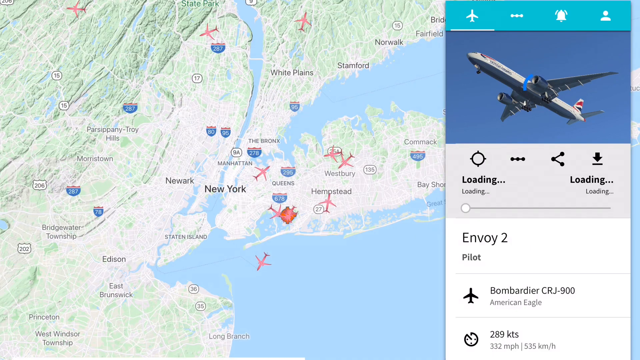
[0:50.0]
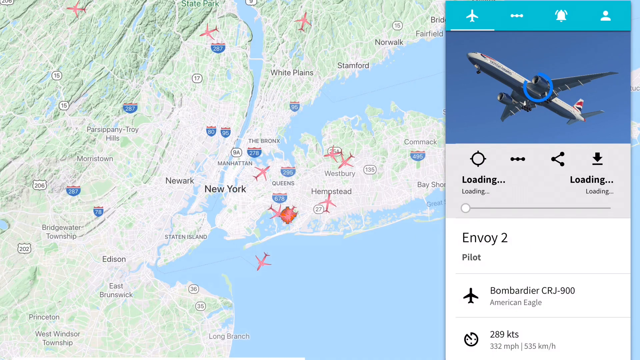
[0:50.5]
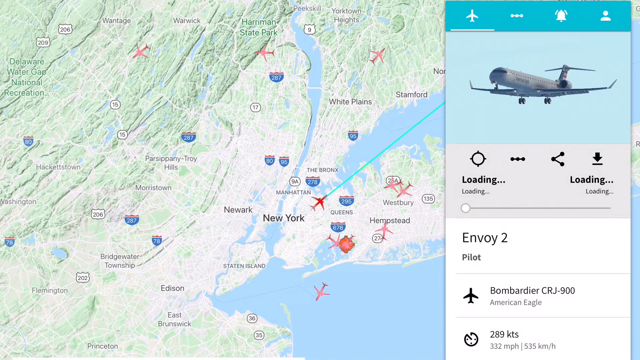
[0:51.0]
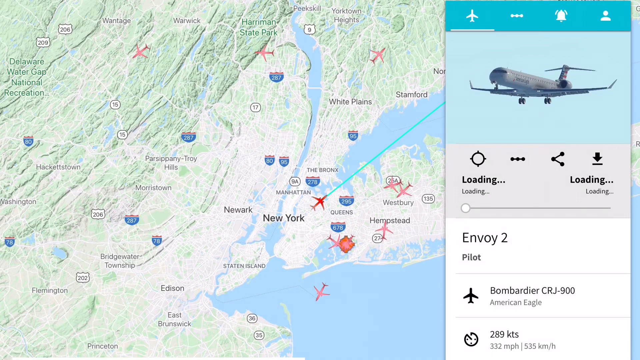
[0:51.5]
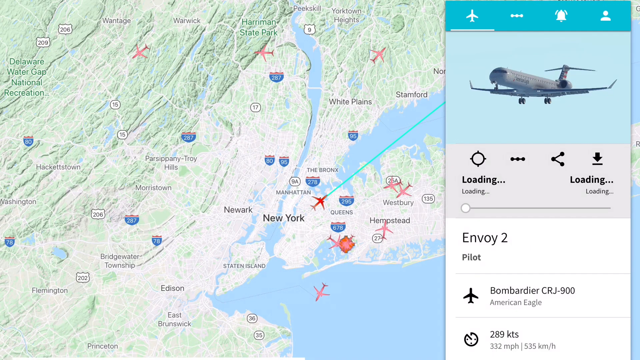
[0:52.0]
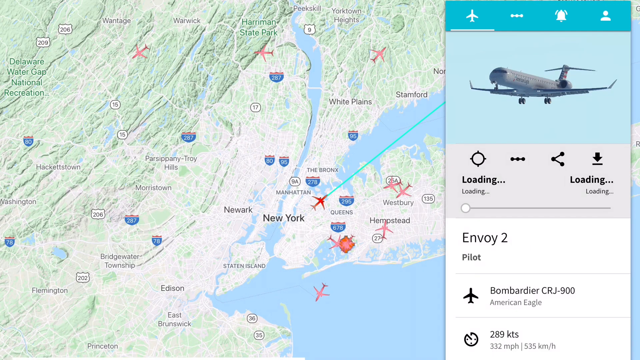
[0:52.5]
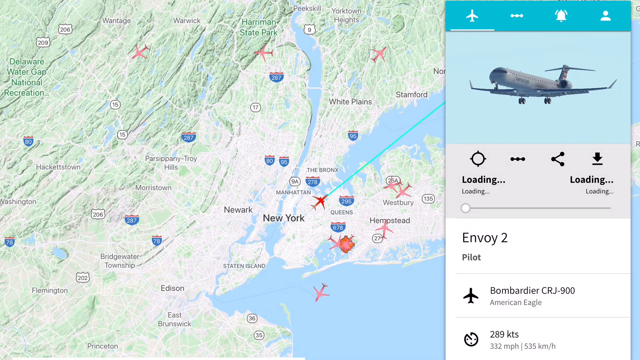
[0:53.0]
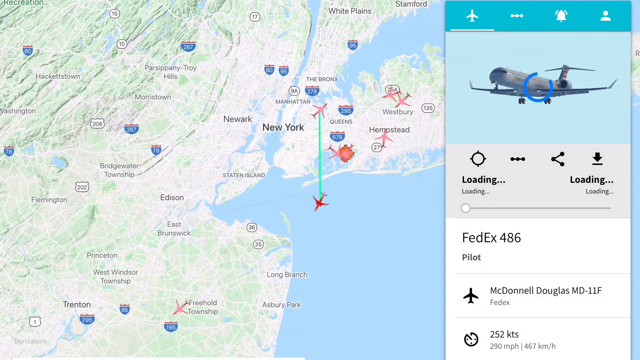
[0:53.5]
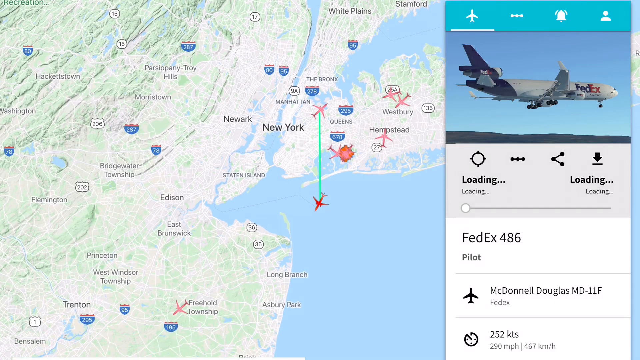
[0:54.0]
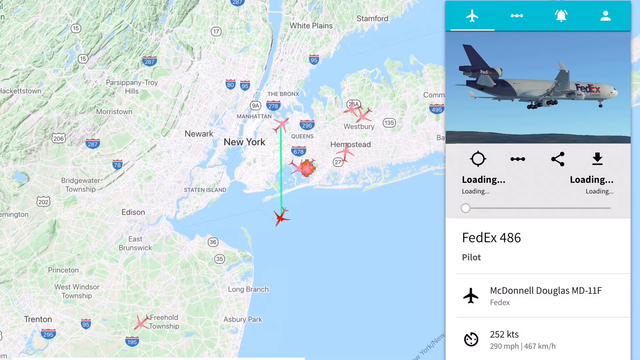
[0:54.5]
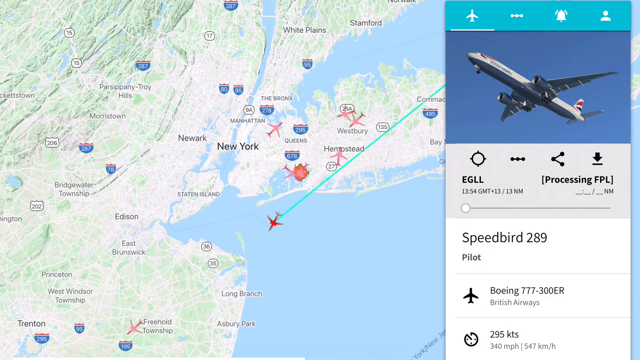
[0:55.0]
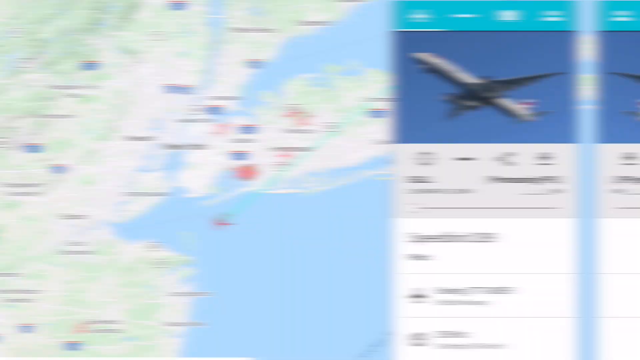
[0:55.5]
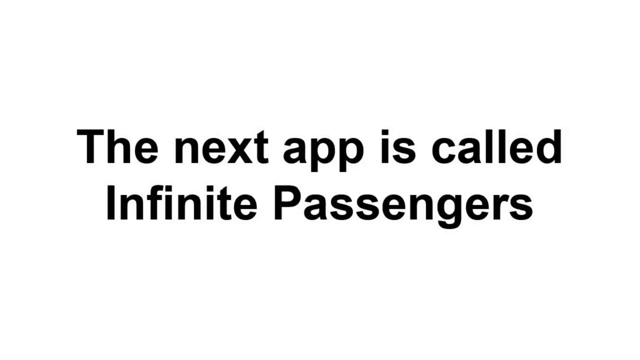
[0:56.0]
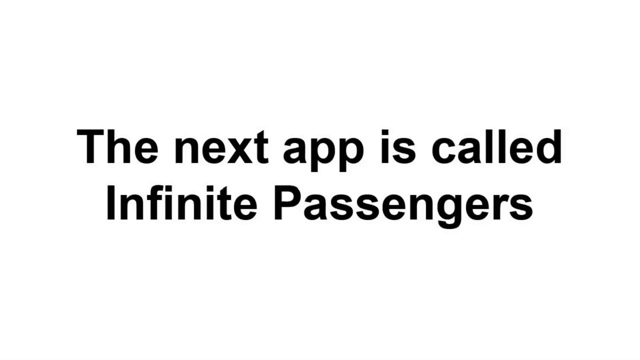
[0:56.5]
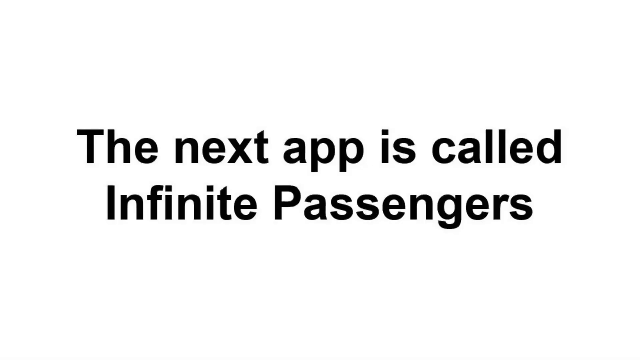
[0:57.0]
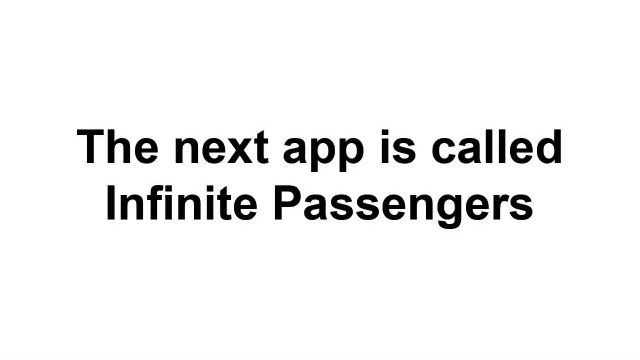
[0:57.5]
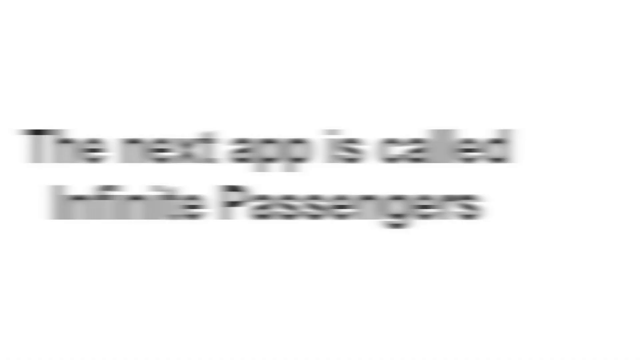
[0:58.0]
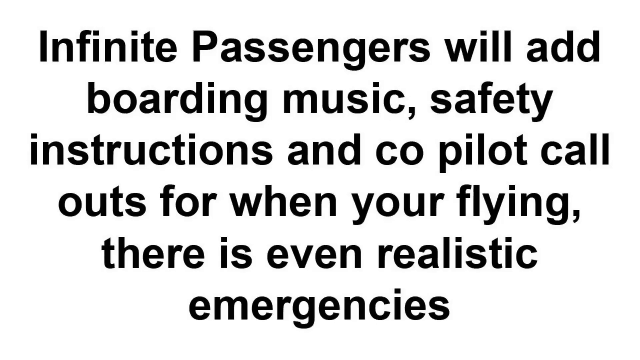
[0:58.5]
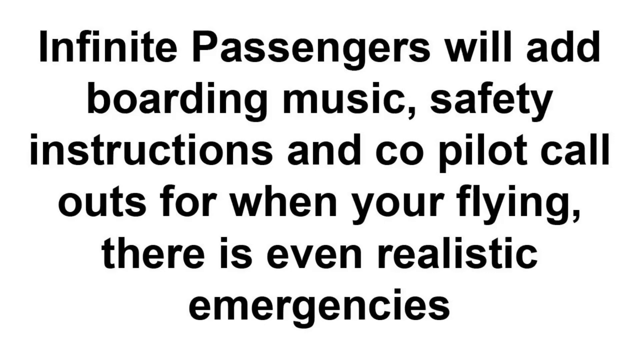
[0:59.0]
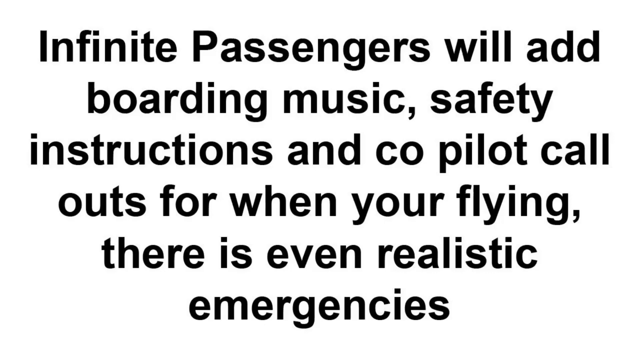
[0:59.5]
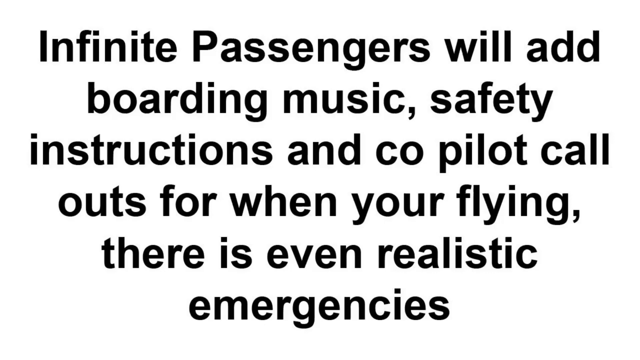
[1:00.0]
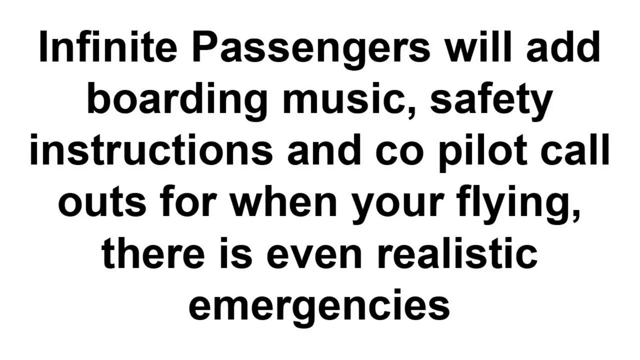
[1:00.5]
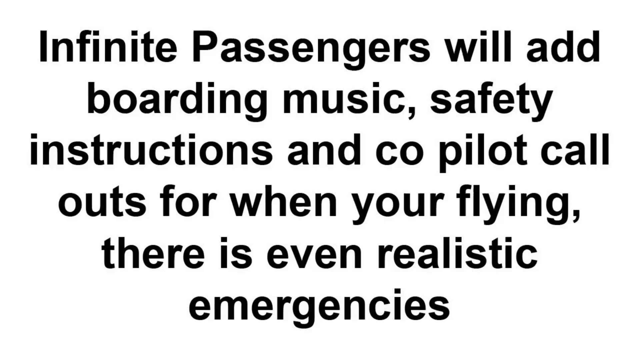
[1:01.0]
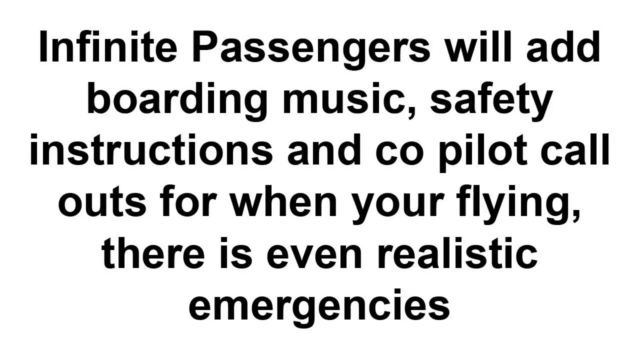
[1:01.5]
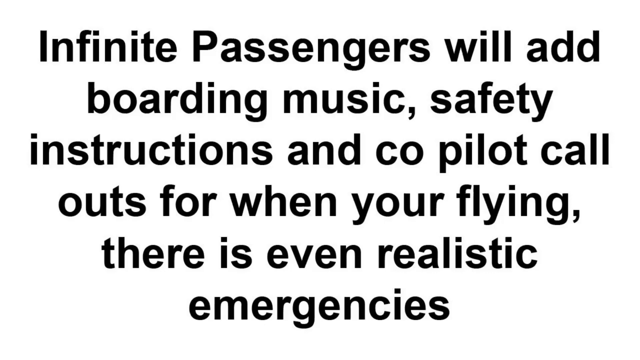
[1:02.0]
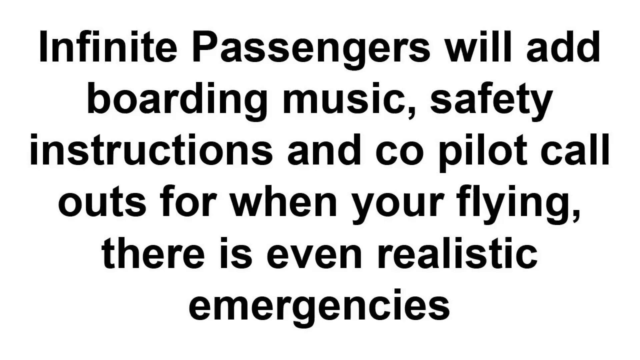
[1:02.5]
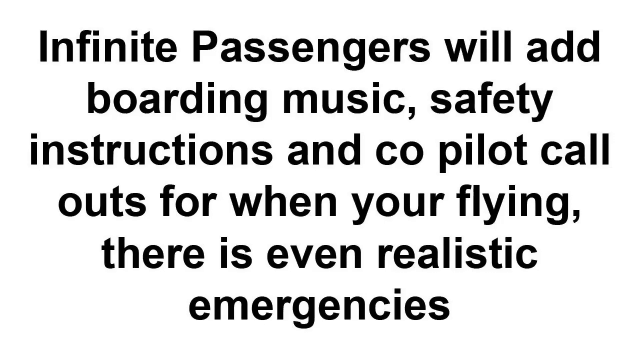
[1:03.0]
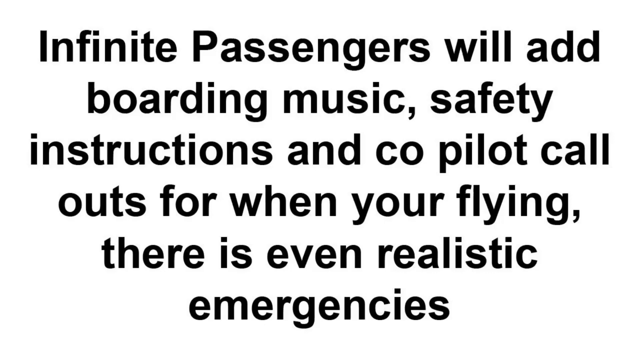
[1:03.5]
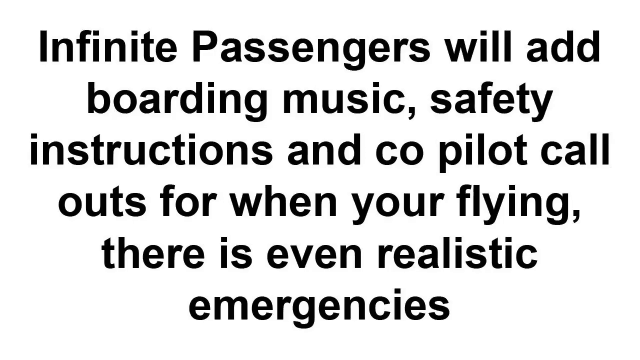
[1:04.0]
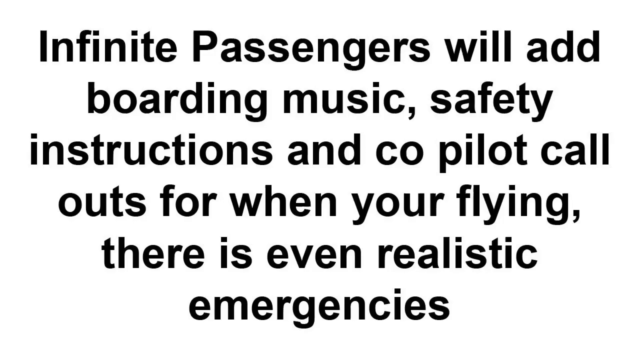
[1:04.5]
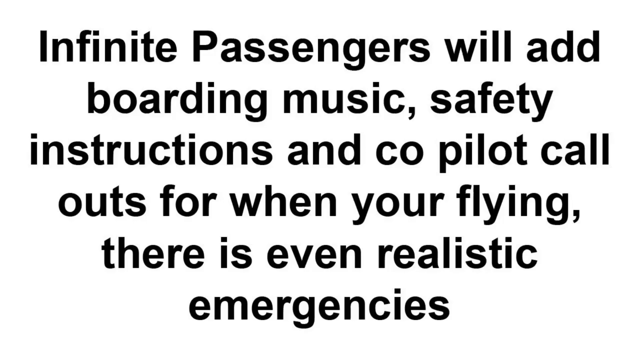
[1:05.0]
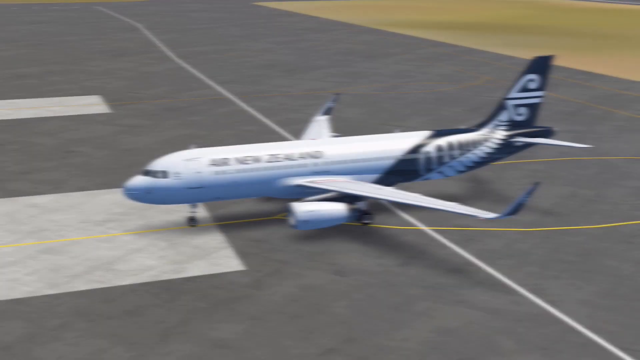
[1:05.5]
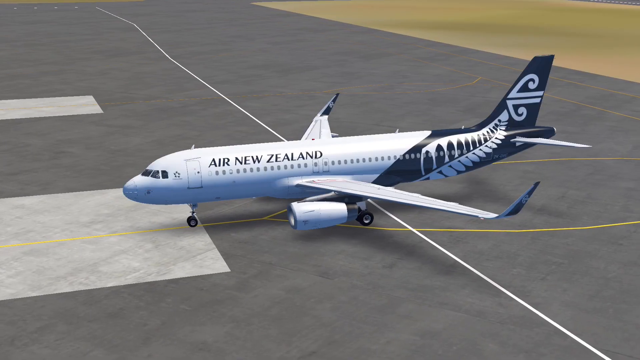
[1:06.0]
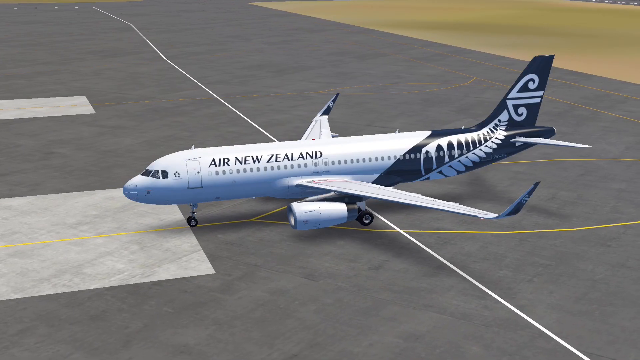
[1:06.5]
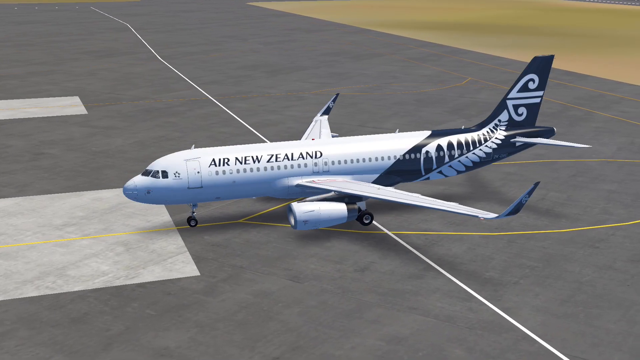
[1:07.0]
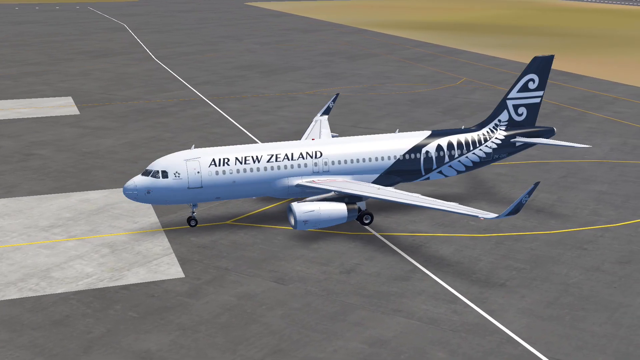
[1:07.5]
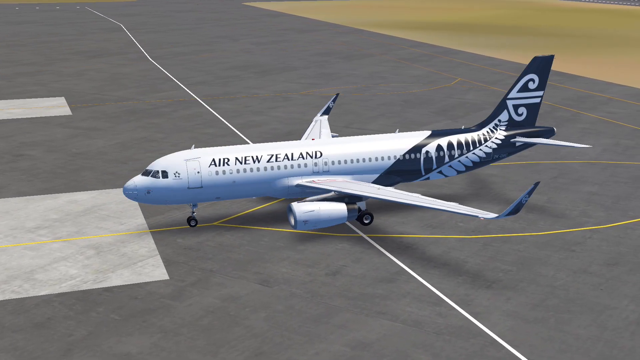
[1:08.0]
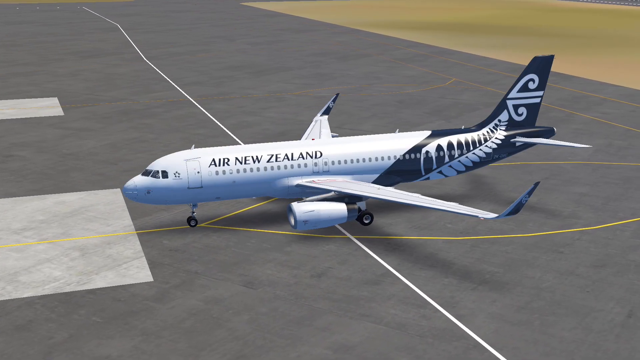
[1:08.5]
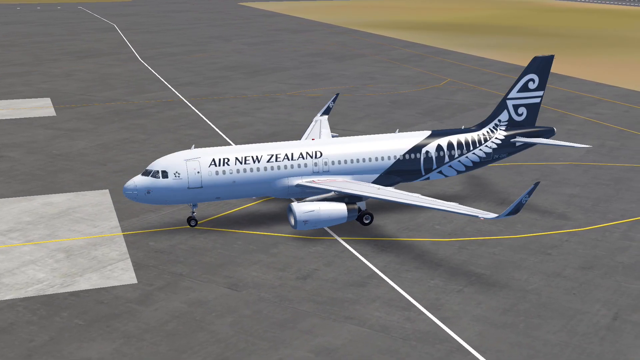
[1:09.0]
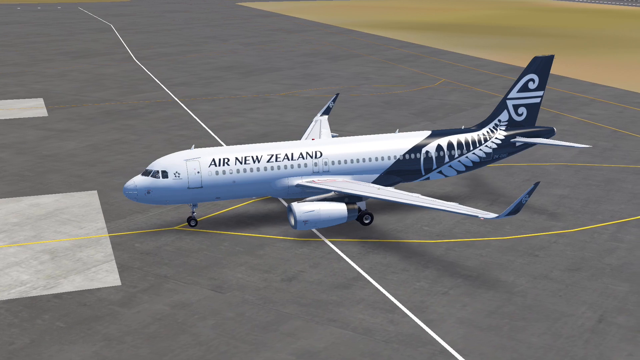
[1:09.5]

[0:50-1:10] In the flight tracker app, a flight over the New York area of the United States is selected. Its information appears on the right: the flight is Envoy 2 and the aircraft is a Bombardier CRJ-900, with an image of the aircraft to the right. A different aircraft flying over New York is then selected, again shown as the Envoy 2 flight, a Bombardier CRJ-900. All the flights on the screen are over the New York area. The next flight selected is Speedbird 289, a Boeing 777. Text on the screen then reads "the next app is called Infinite Passengers. Infinite Passengers will add boarding music, safety instructions, and co-pilot call-outs for when you're flying. There is even realistic emergencies." This is followed by an image of an Air New Zealand aircraft sitting on a runway.